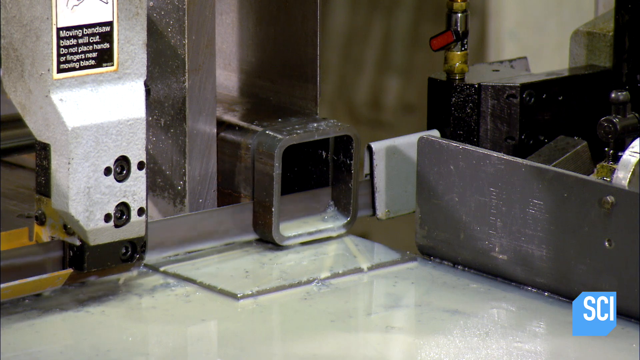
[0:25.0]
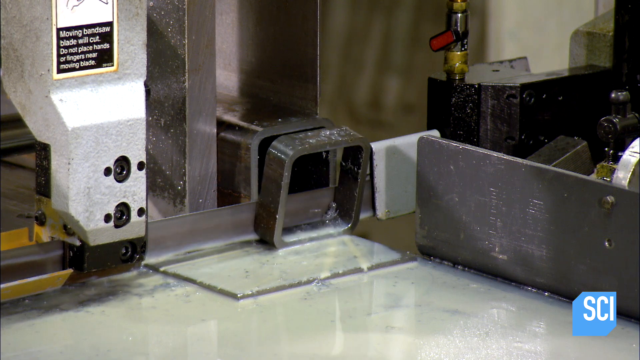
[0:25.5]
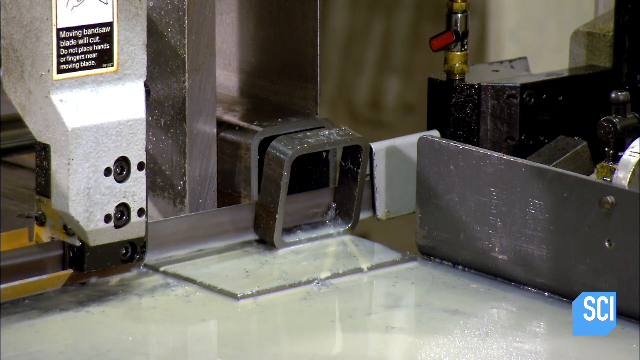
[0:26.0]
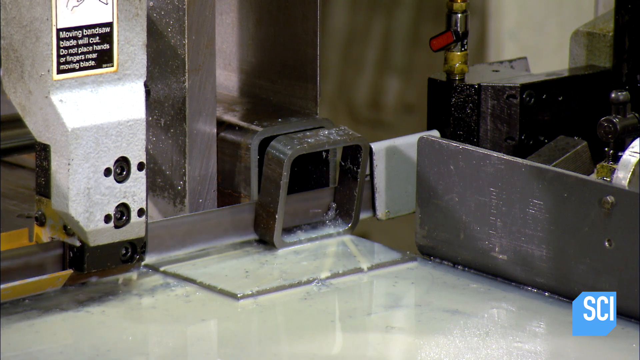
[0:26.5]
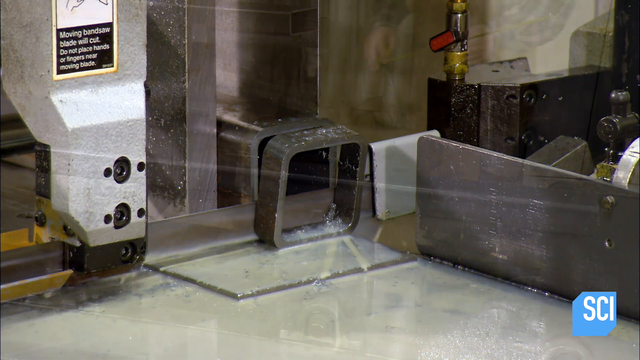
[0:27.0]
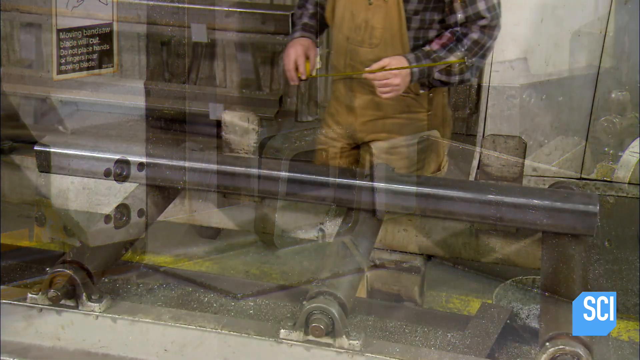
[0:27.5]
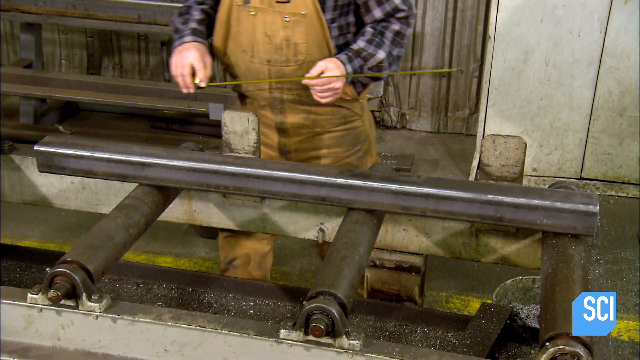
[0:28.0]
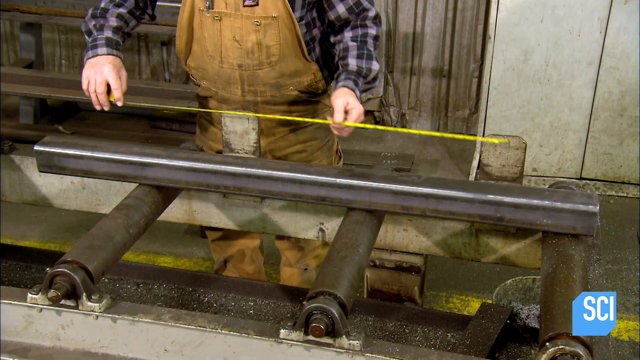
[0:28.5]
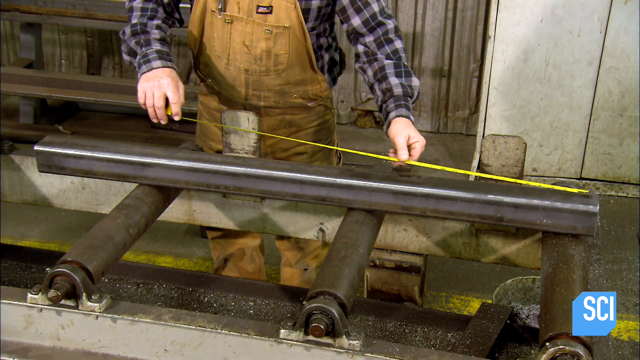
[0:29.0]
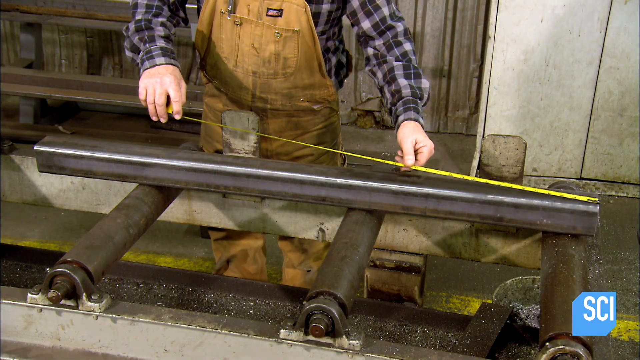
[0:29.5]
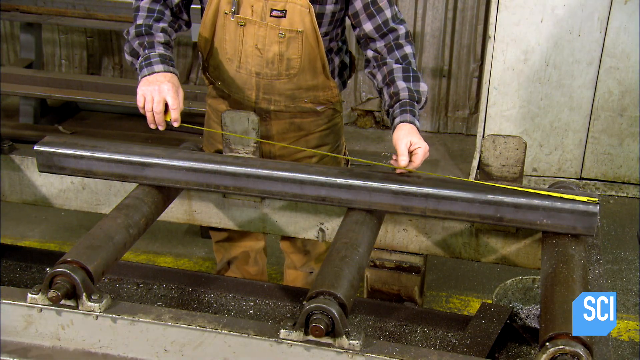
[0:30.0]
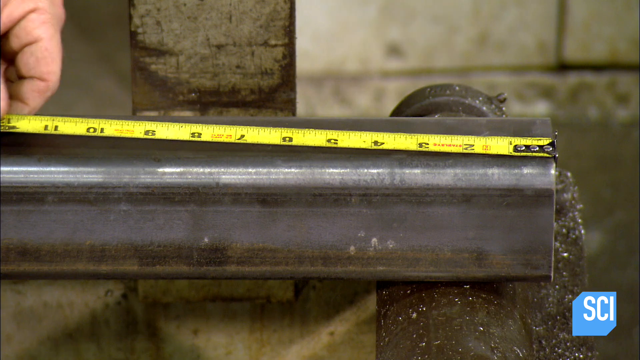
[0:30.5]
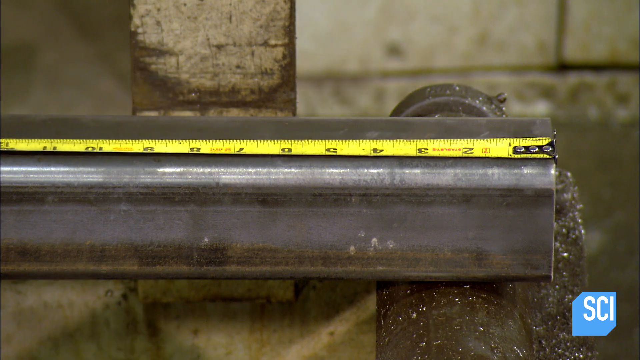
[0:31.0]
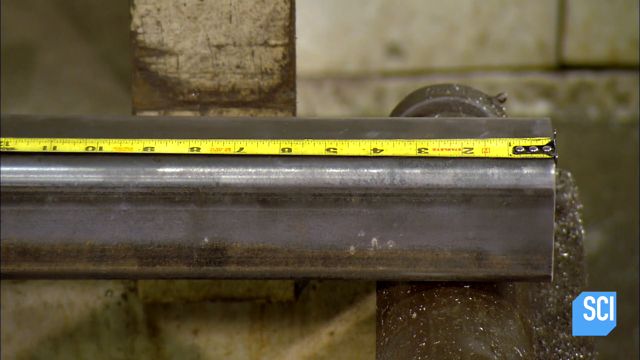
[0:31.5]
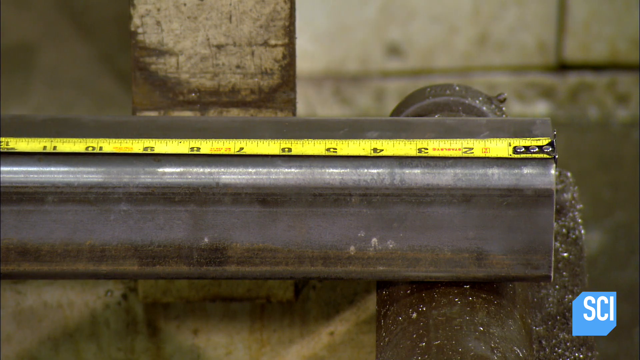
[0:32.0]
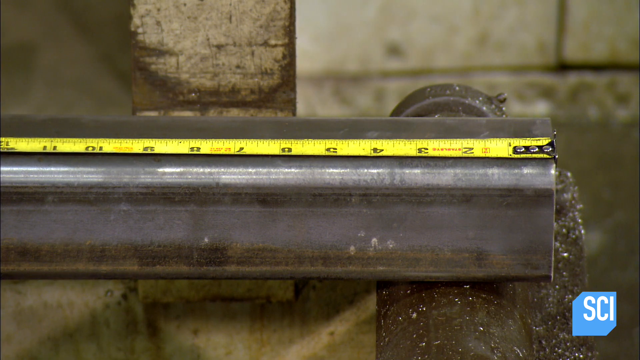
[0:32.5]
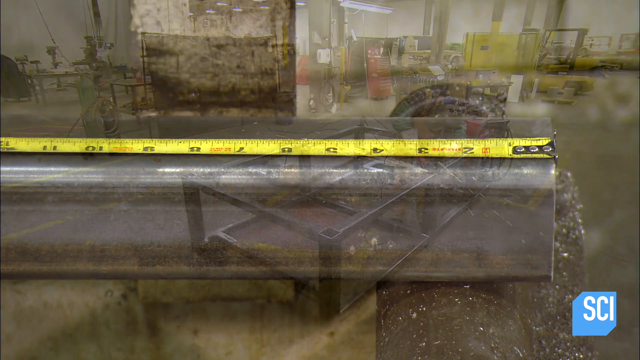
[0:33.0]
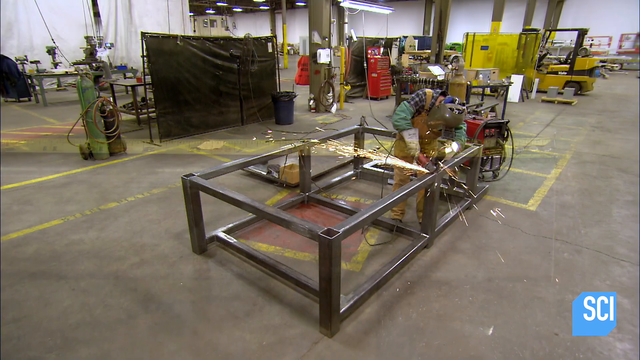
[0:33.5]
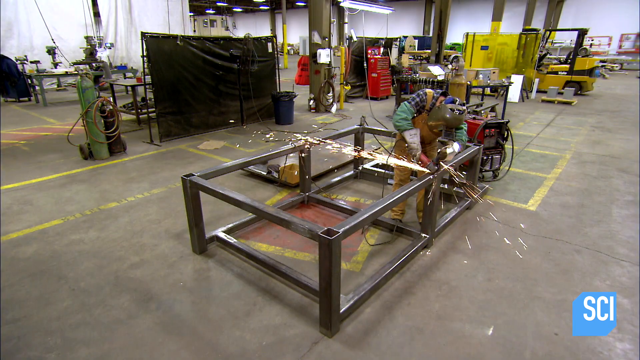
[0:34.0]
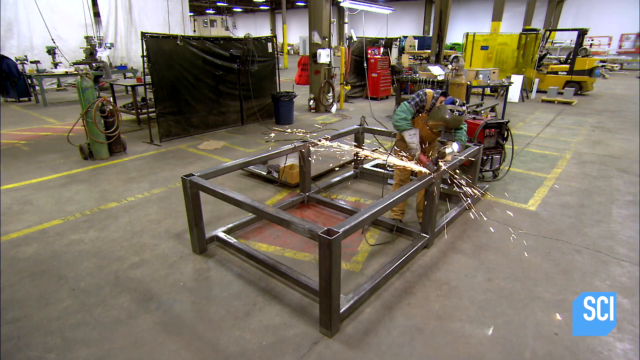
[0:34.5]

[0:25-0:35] The saw cutting the piece of metal is shown. A worker in brown overalls and a blue long-sleeved shirt measures a square, tubular piece of metal. He stands in front of the metal and places a yellow tape measure on it, then apparently grinds it, and the saw is shown cutting it. The piece of metal is on the ground, connected together with many other pieces of metal, and rests on what look like other tubular pieces of metal that seem to roll. There is a brick wall in the background behind the man. The machine cutting a piece off the metal is shown repeatedly.